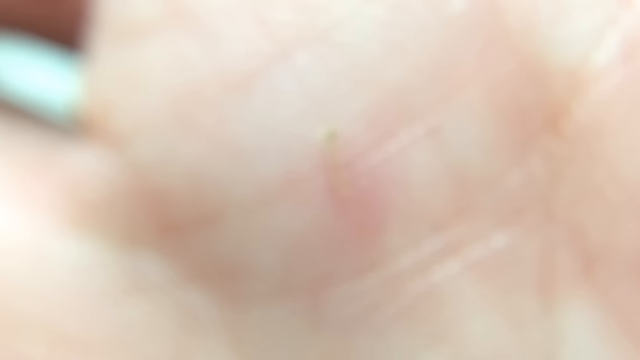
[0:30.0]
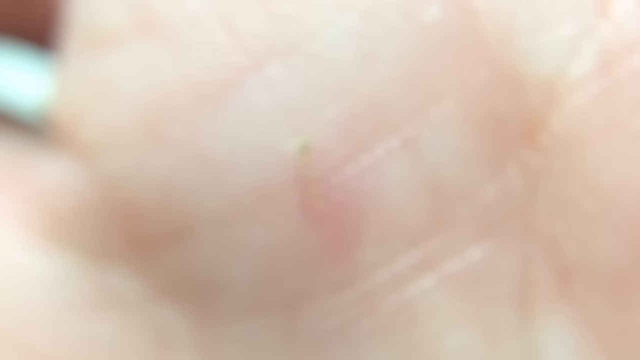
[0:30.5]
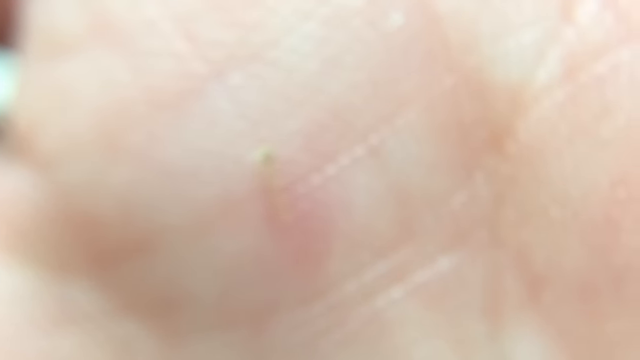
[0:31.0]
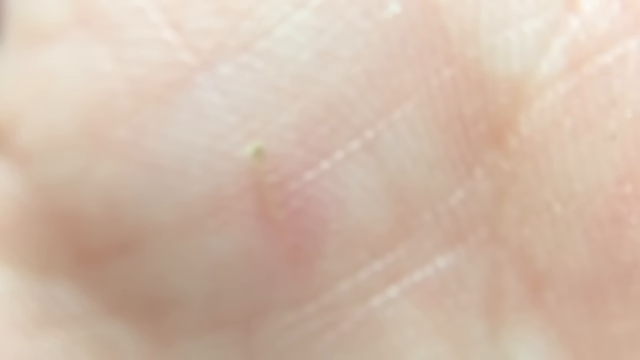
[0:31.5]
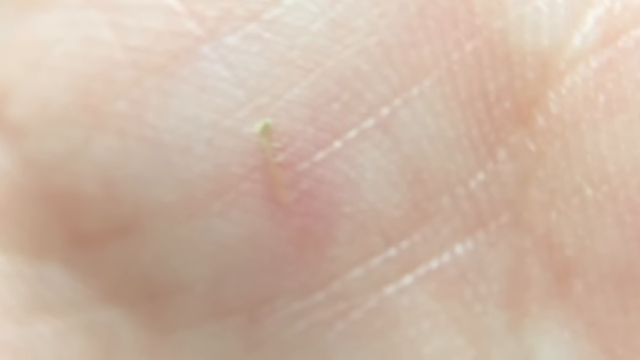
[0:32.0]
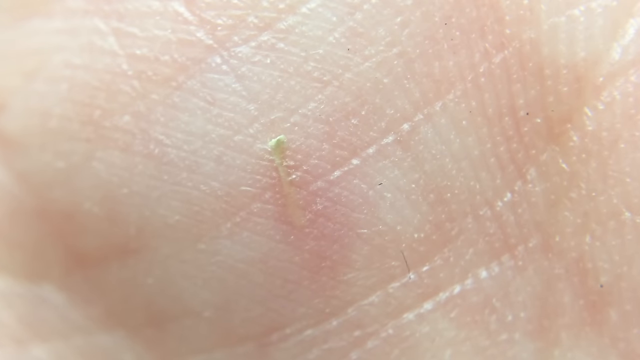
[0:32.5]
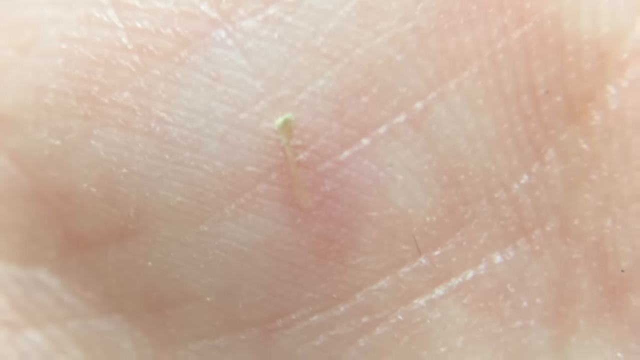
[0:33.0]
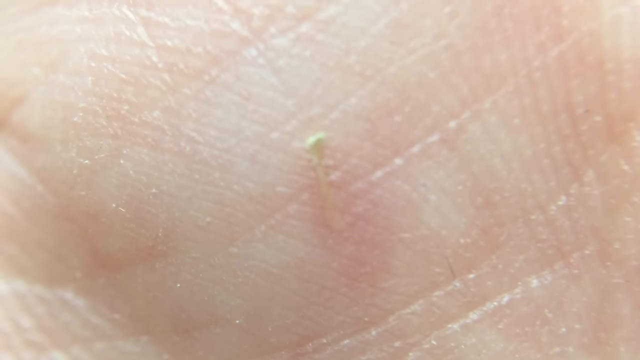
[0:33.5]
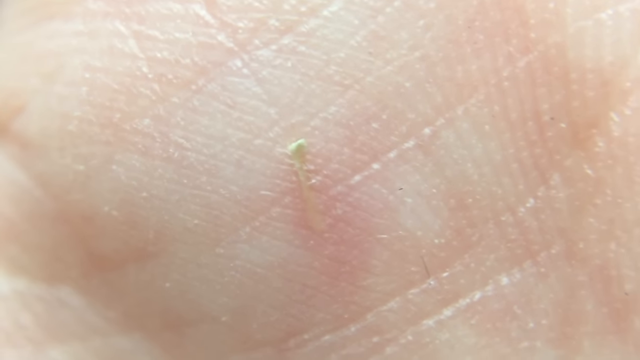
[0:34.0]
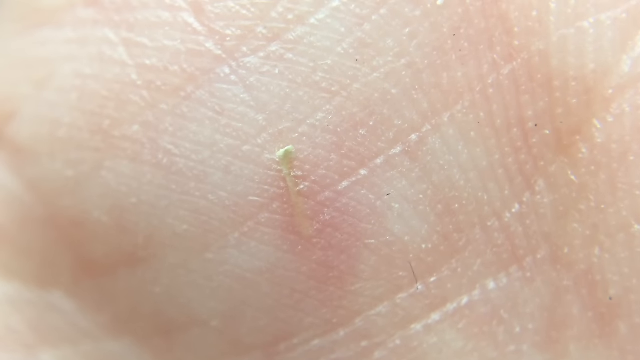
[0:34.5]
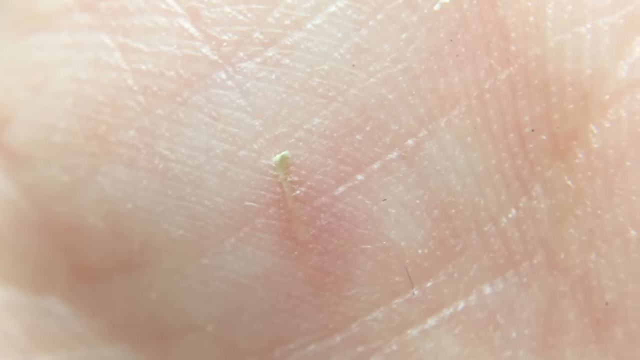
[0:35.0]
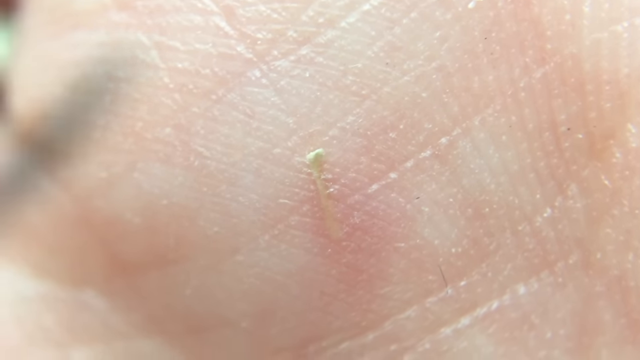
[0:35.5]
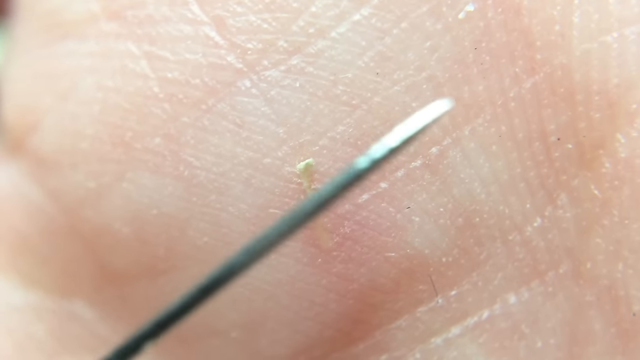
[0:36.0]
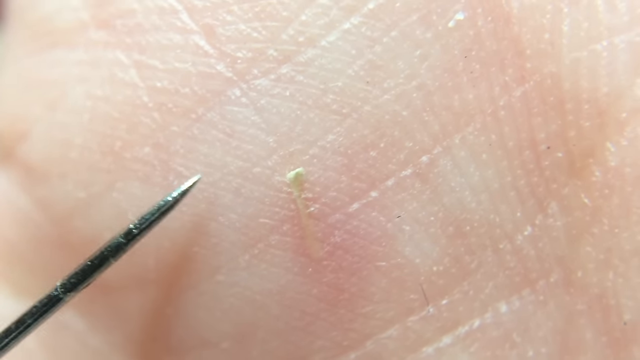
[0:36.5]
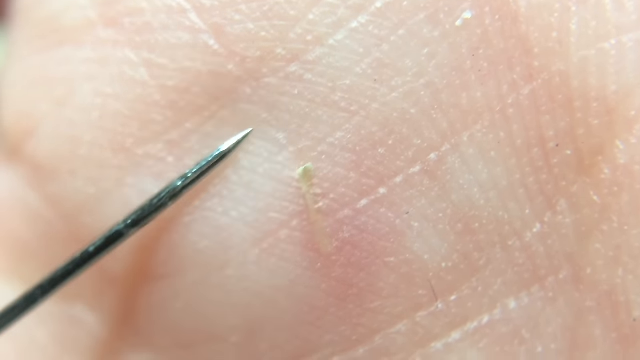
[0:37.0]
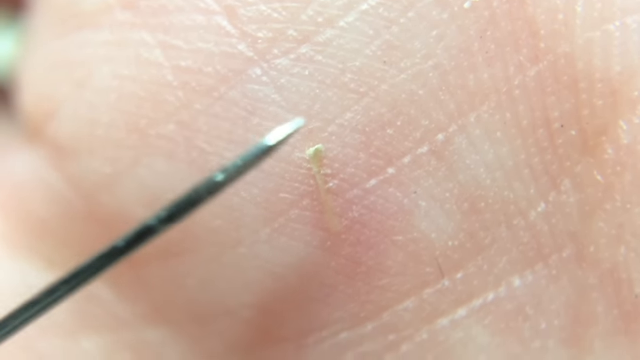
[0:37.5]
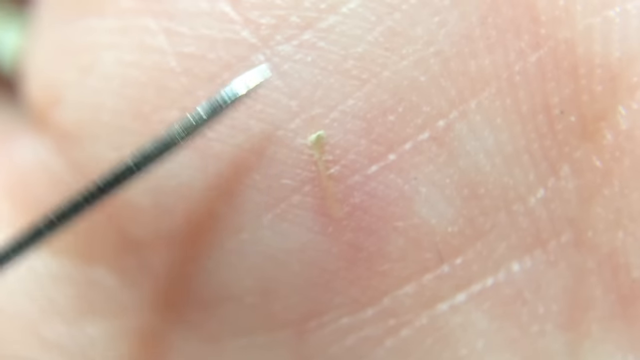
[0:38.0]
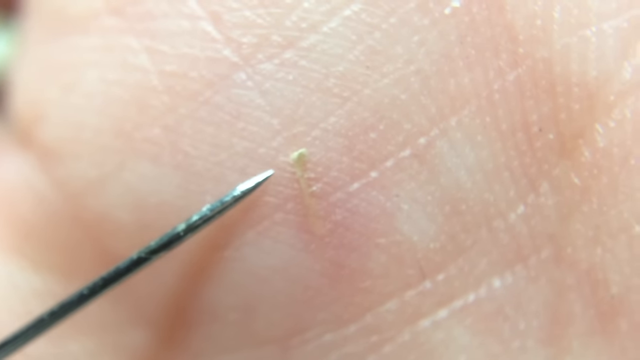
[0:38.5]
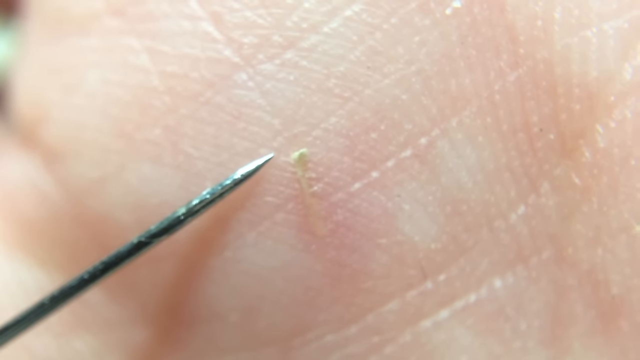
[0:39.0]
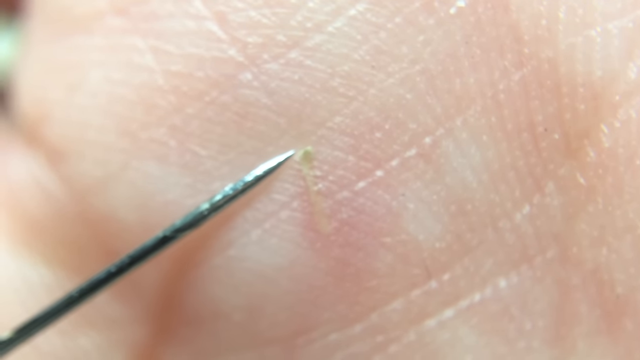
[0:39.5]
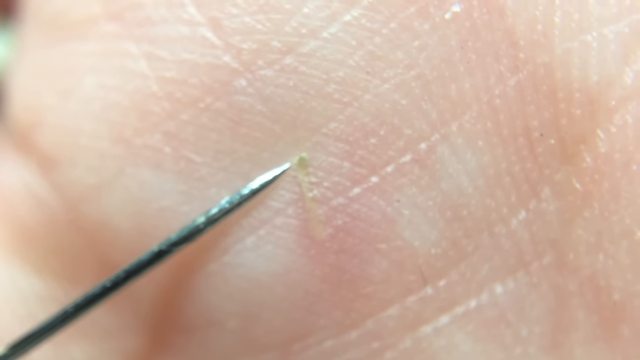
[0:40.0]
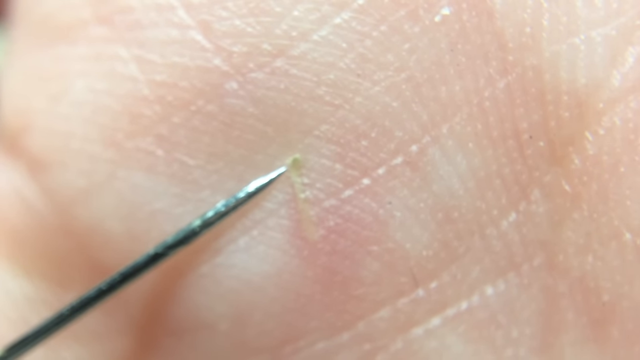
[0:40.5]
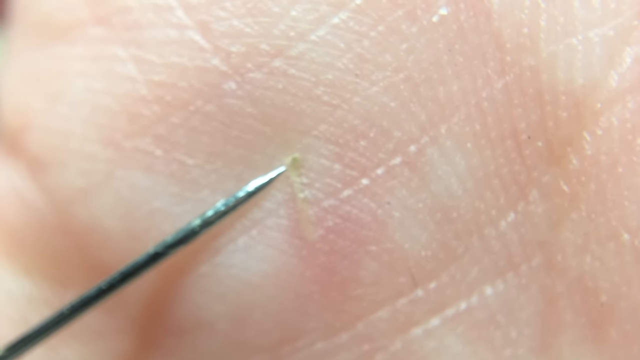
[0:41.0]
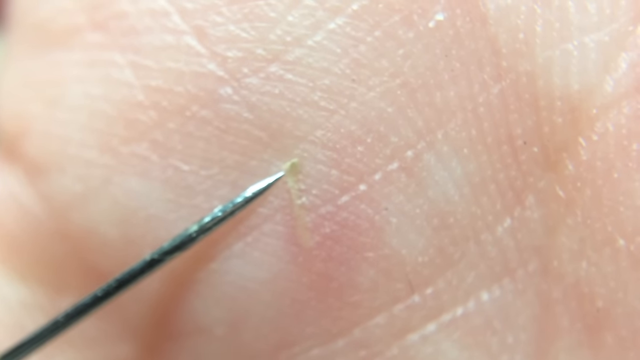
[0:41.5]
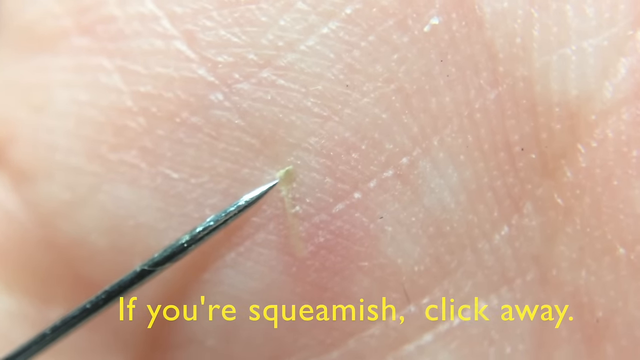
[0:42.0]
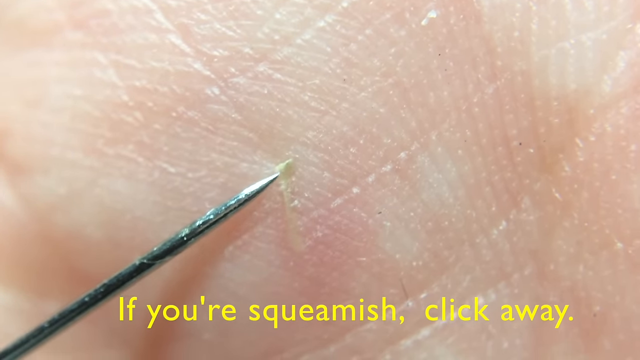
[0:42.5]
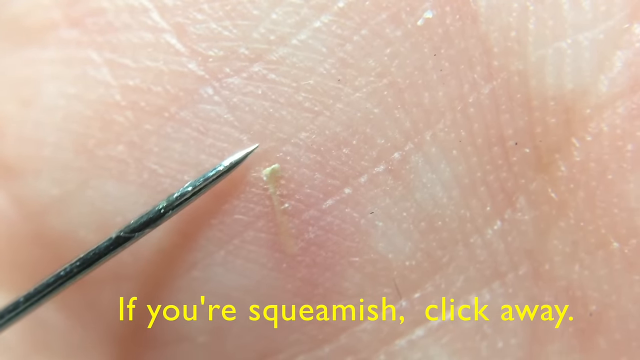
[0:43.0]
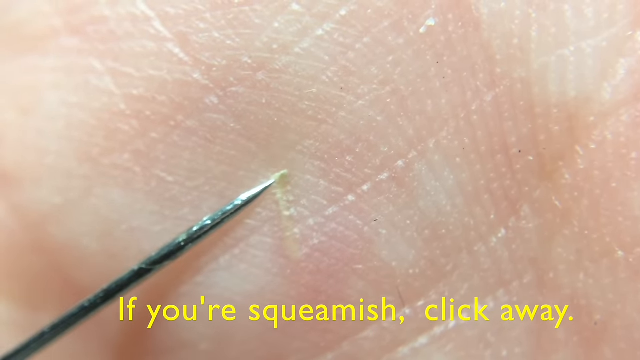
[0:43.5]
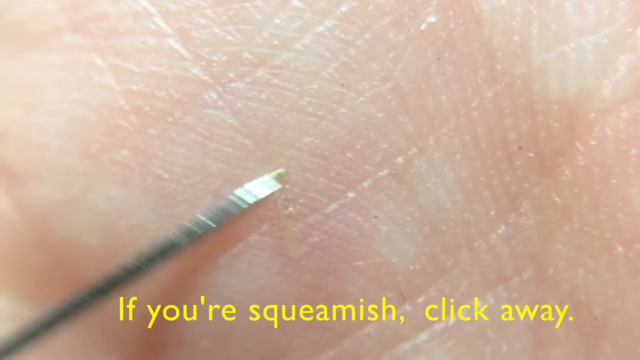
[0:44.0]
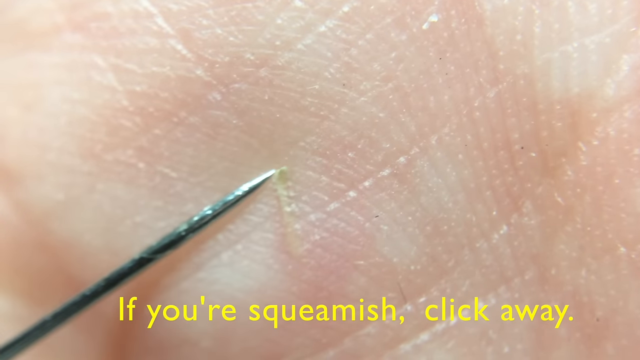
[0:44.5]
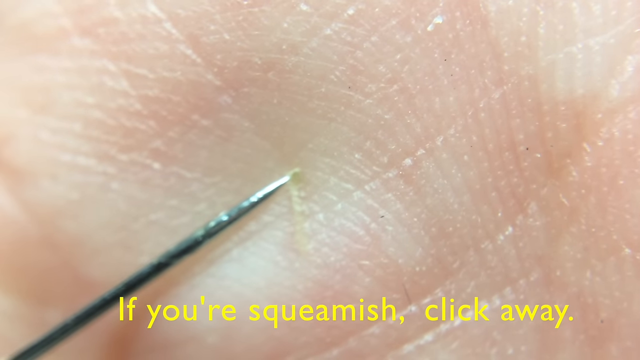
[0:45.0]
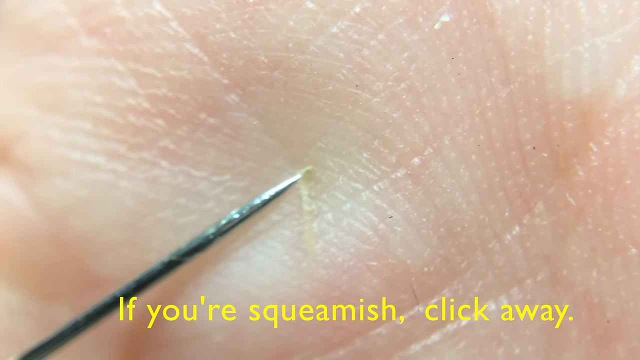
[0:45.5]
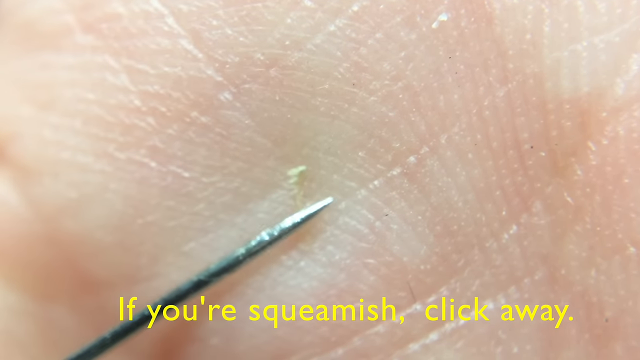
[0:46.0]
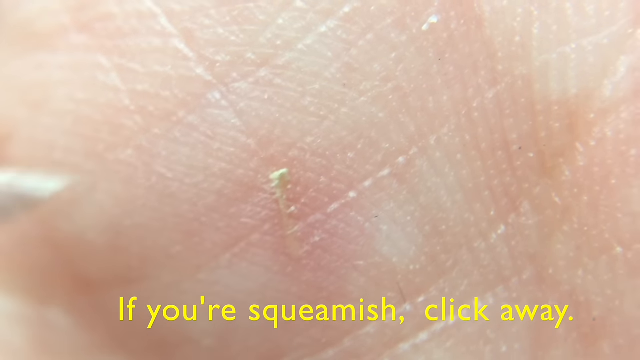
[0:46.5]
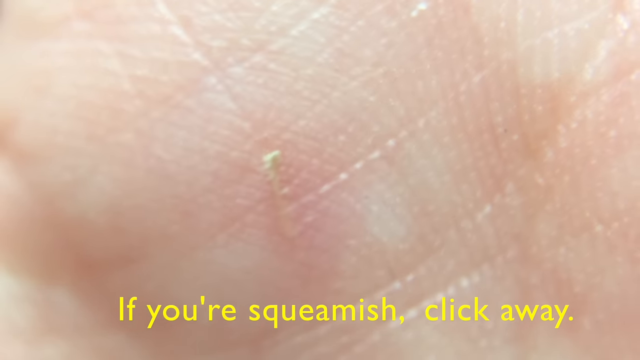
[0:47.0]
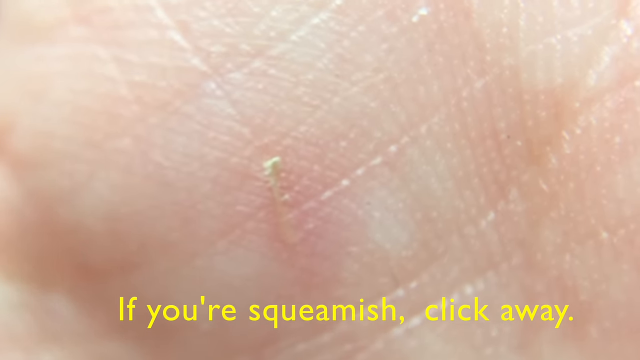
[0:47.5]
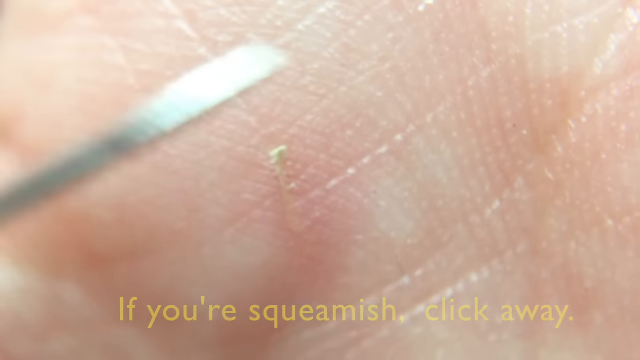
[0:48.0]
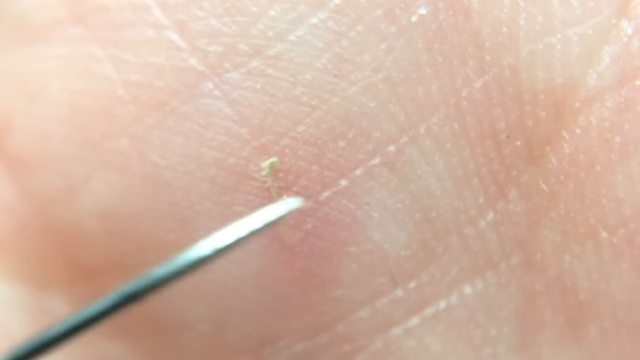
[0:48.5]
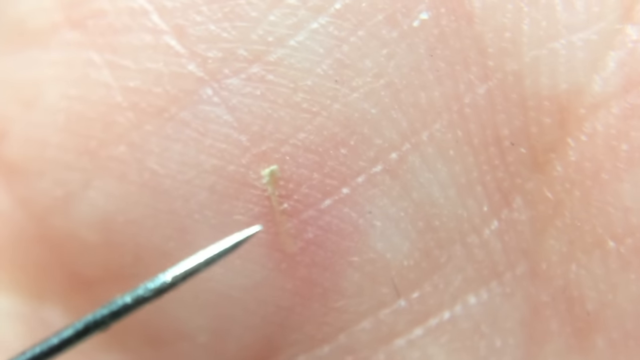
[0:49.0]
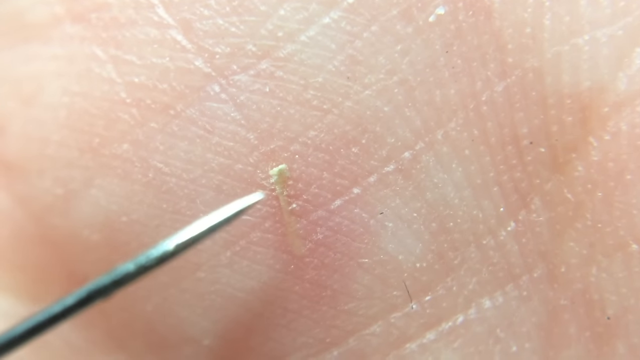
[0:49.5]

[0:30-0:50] A very zoomed-in close-up shows the palm of a hand, with the skin and its print lines visible. A small, light piece of something is stuck in the skin. A silver metal needle comes into frame, and he points to the small piece of wood stuck in his hand with the tip of the needle, then touches it. Along the bottom of the screen, text reads "if you're squeamish click away". He picks at the skin with the point of the needle, trying to get the piece of wood out of his hand, doing this quite a few times and touching the top of the wood splinter stuck in his hand.